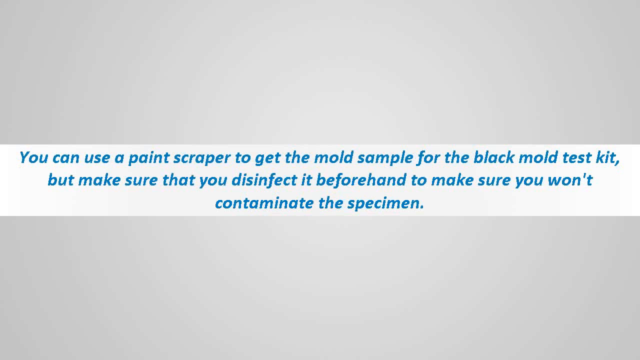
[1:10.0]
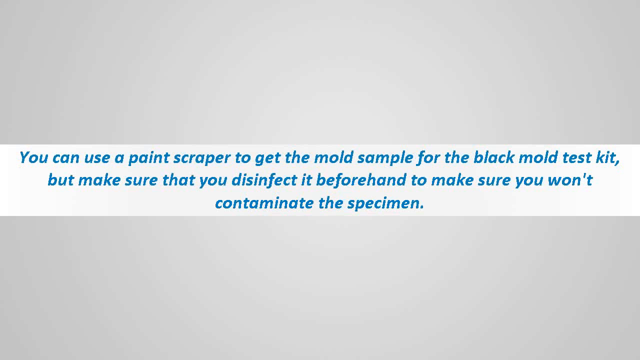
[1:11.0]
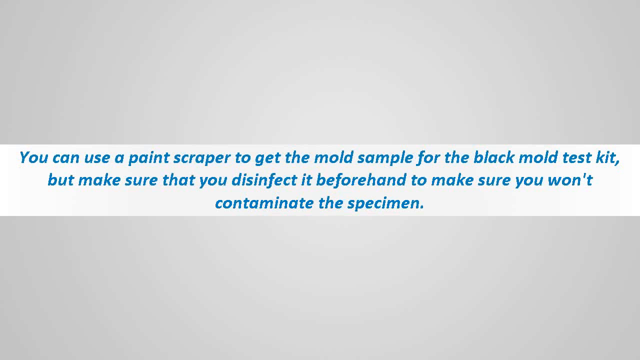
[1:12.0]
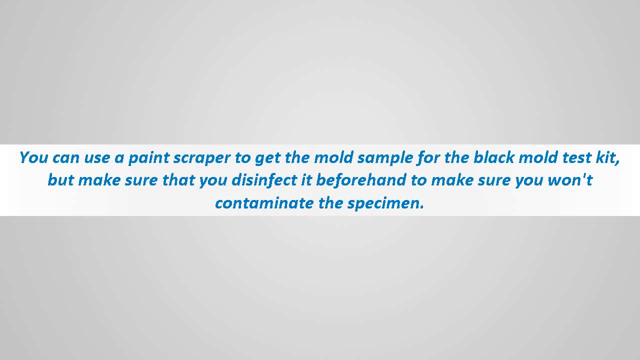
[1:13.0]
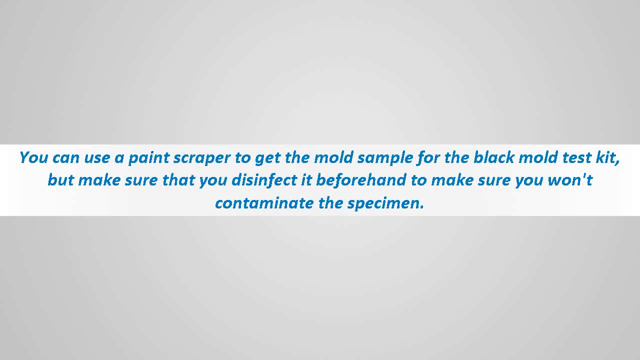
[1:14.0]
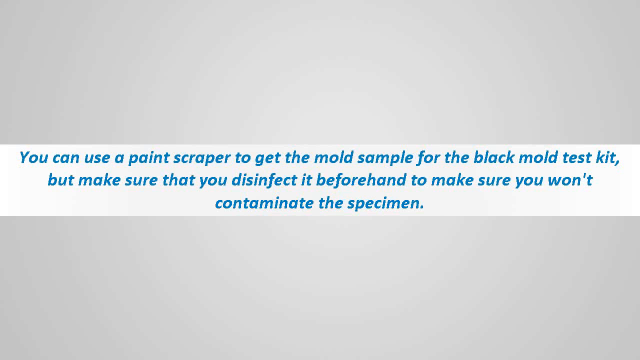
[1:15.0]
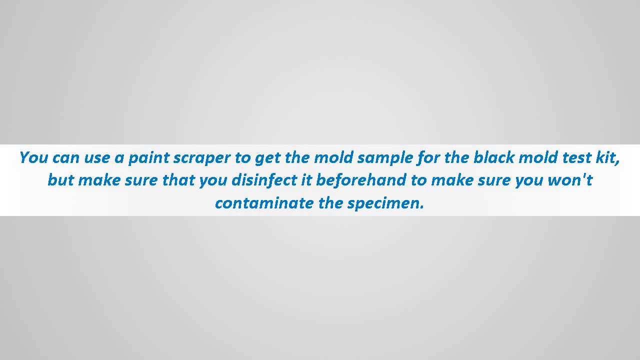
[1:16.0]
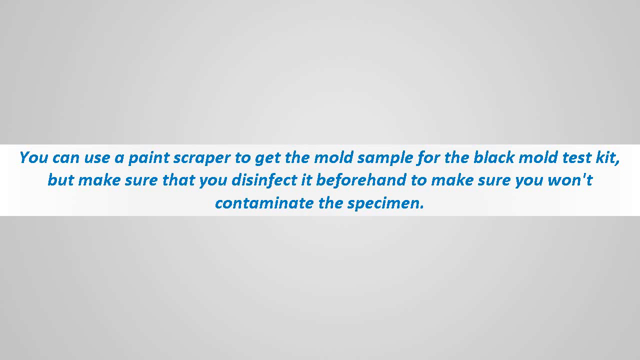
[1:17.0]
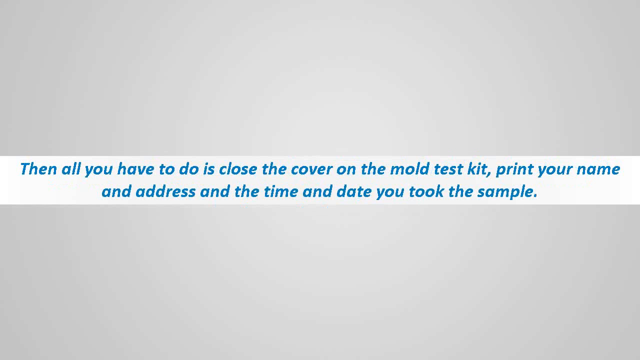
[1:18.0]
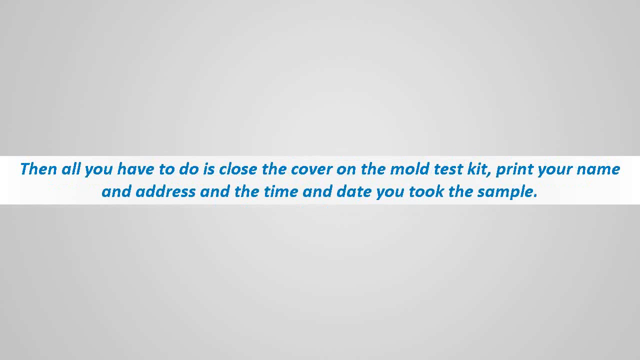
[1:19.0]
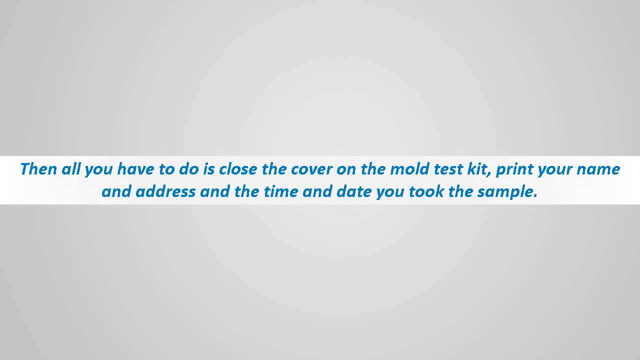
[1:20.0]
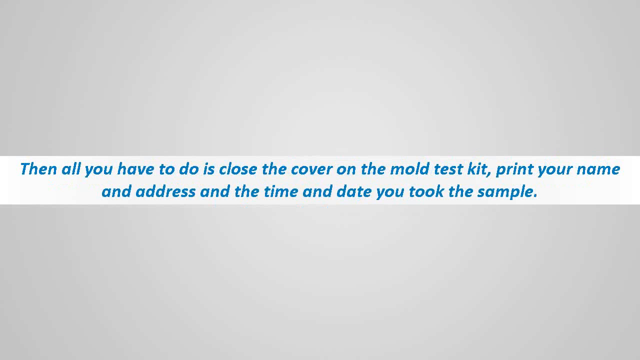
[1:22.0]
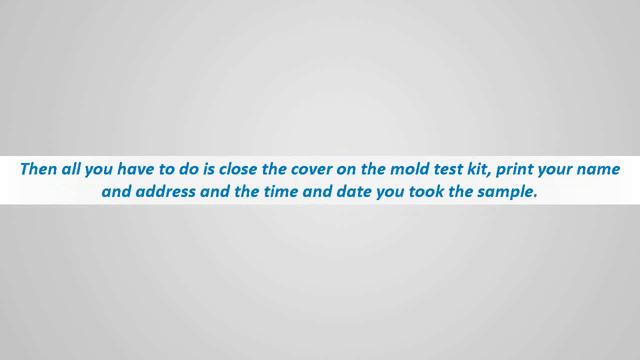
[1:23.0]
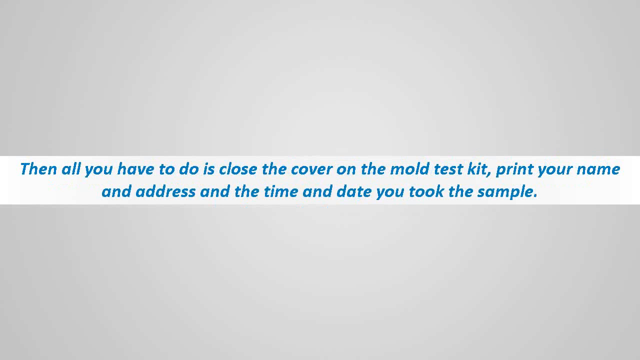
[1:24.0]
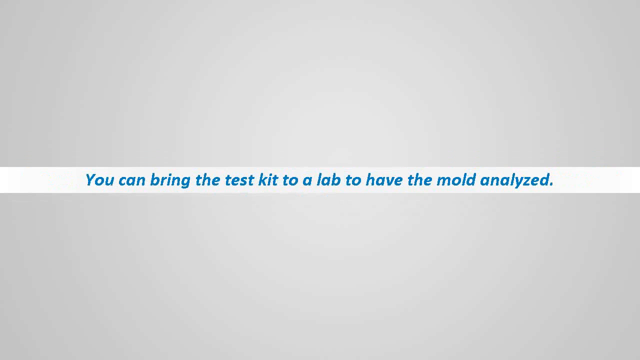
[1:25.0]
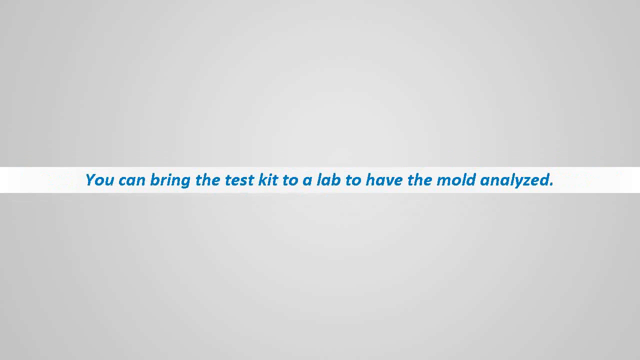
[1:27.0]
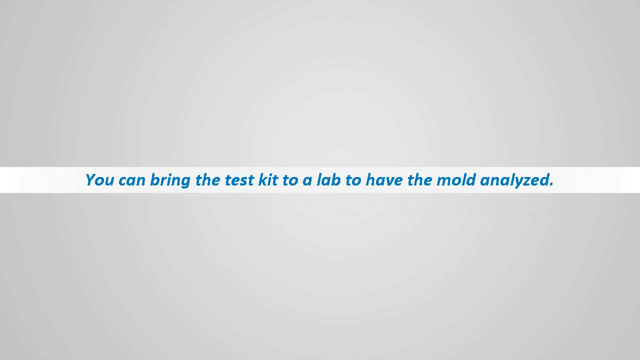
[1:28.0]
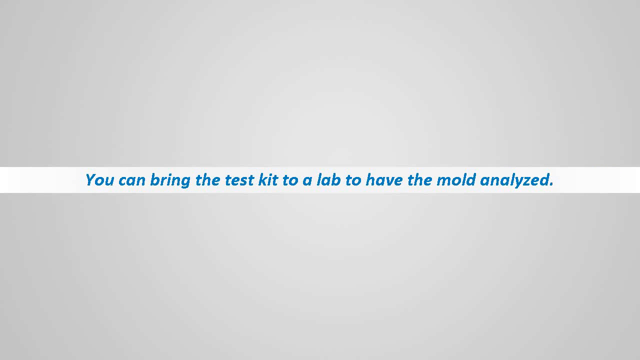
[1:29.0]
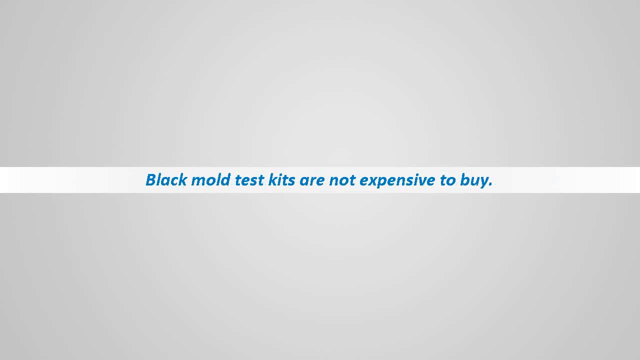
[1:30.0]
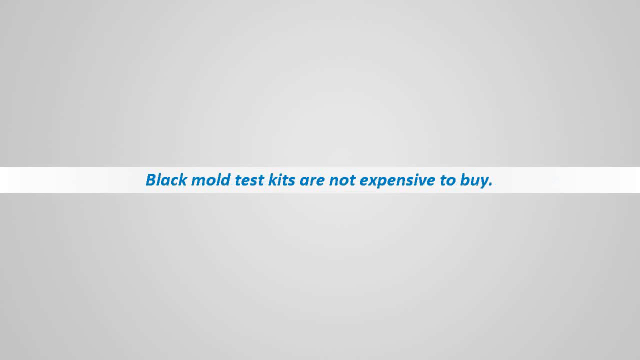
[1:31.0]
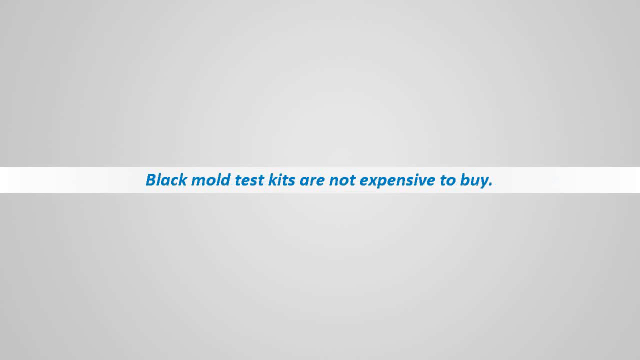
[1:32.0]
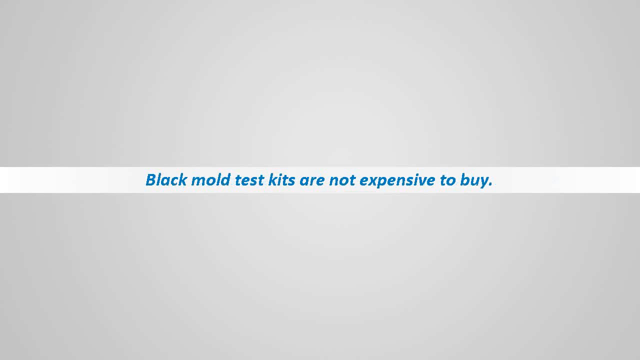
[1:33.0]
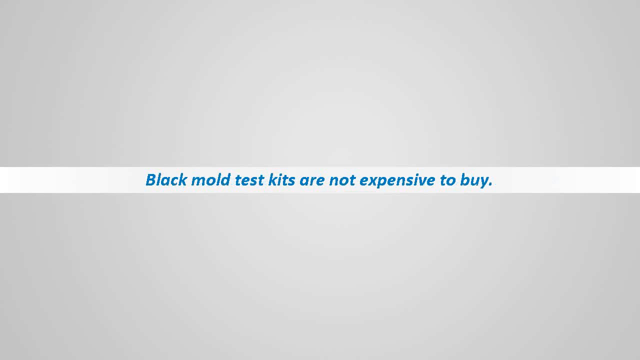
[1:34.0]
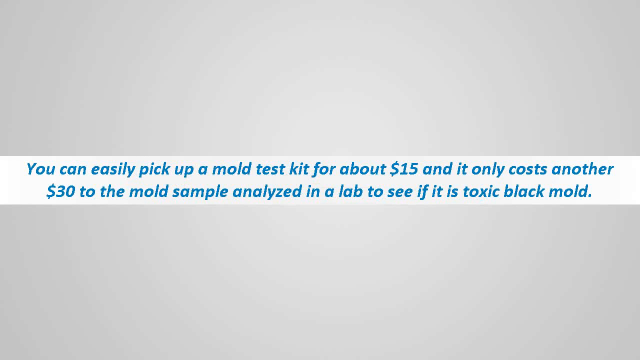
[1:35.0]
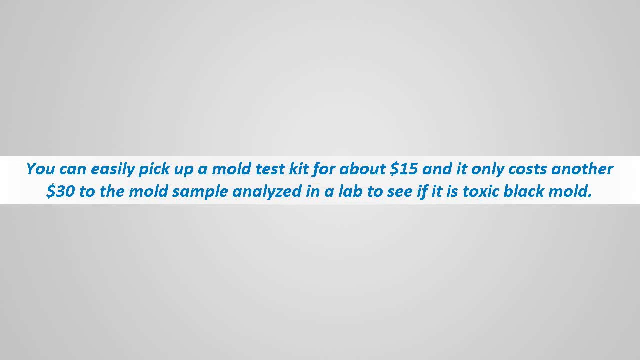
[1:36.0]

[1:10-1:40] On the gray screen, a white block in the middle contains blue text reading "You can use a paint scraper to get the mold sample for the black mold test kit, but make sure that you disinfect it beforehand to make sure you won't contaminate the specimen." The next text appears on the same background: "Then all you have to do is close the cover on the mold test kit, print your name and address, and the time and date you took the sample."